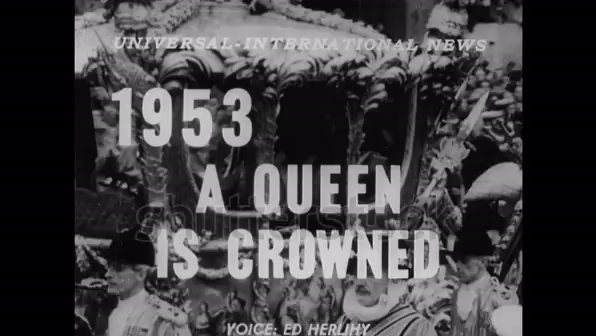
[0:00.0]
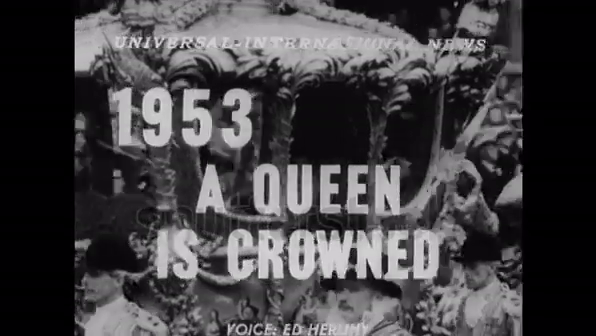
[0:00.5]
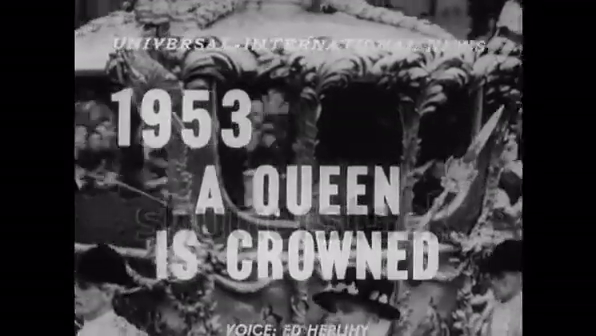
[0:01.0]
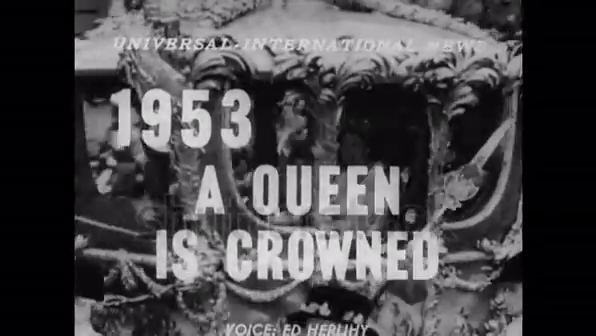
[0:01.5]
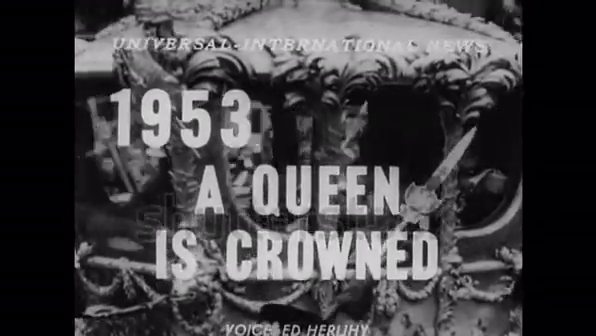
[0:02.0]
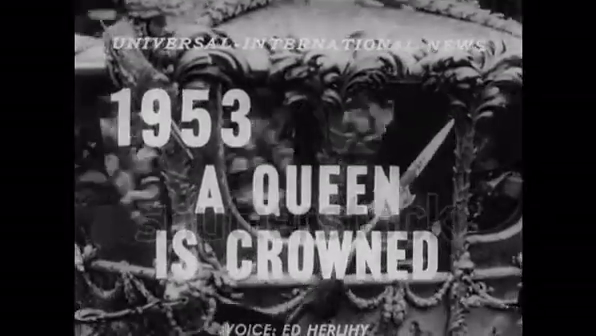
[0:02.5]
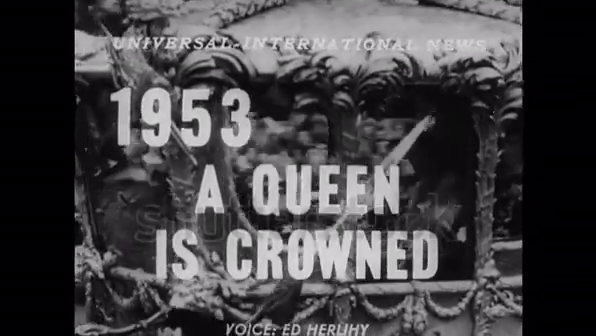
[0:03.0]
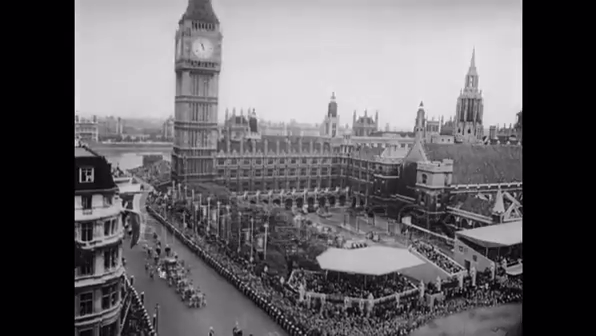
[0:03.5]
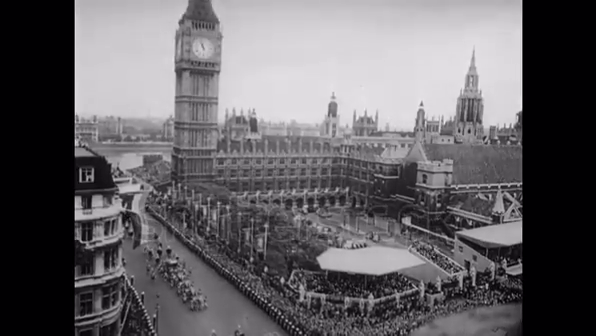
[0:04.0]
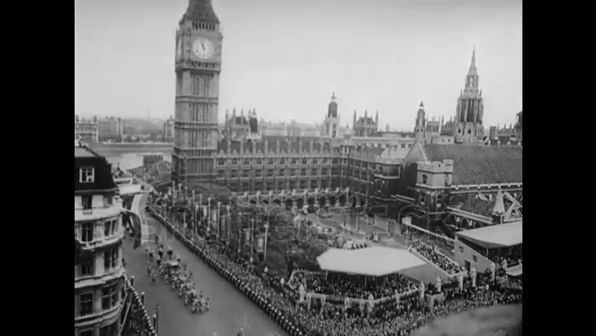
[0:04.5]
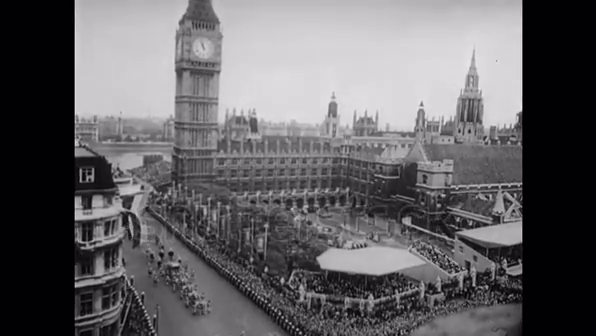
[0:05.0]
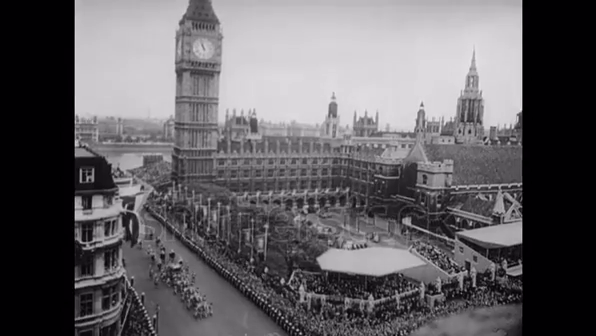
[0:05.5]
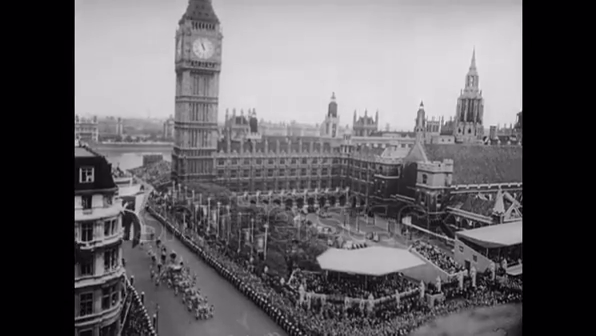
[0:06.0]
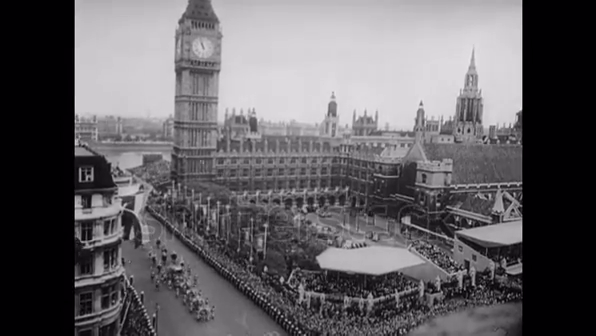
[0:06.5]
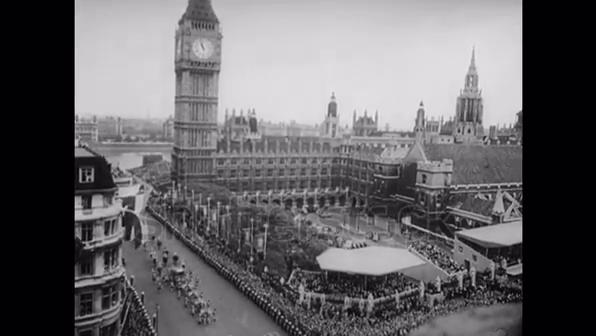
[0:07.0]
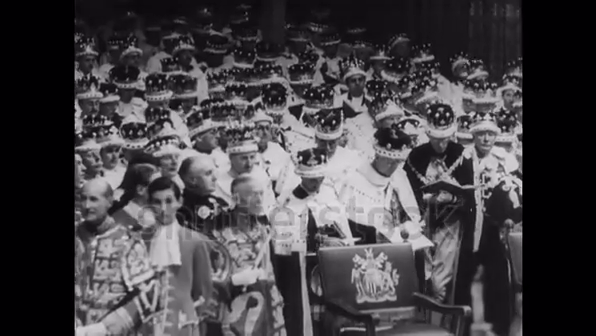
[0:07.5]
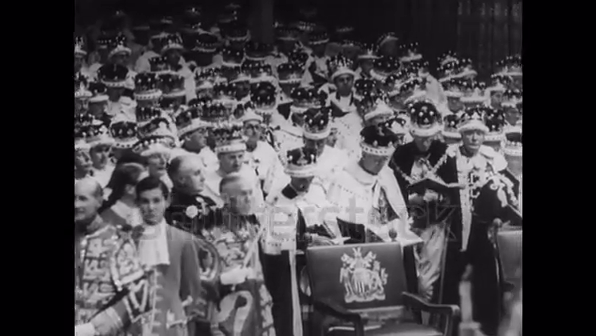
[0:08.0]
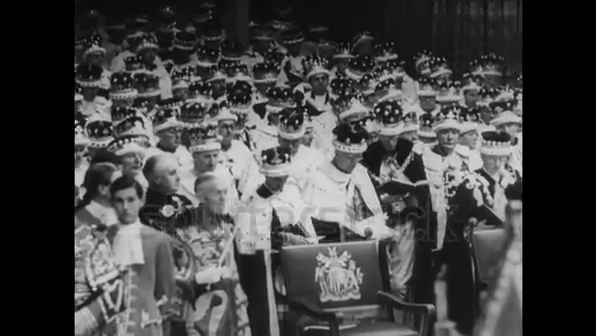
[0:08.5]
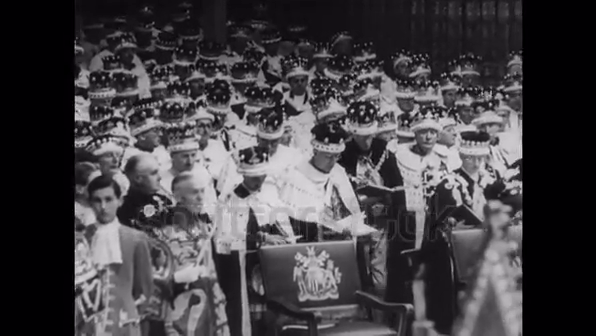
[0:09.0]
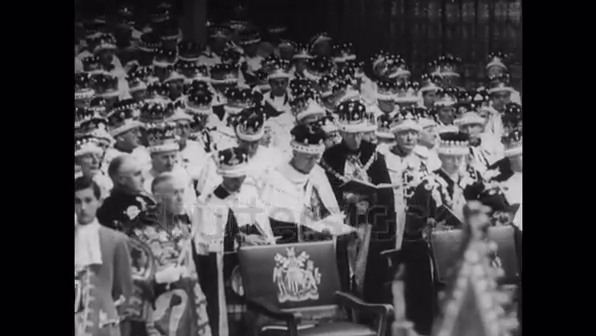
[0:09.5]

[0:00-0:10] A large caption in the center reads "1953, a queen is crowned." The black-and-white footage shows a ceremony with a march, as people, royalty, march to crown a queen. There is something like a chariot with someone riding inside it, perhaps the queen. A zoomed-out view then shows a very large church or cathedral, with a lot of people attending the event. In the bottom left corner, the royalty march in a line. A whole group of royalty appears, with many people, many of them men, wearing crowns, and some men holding books in their hands. The event takes place outside.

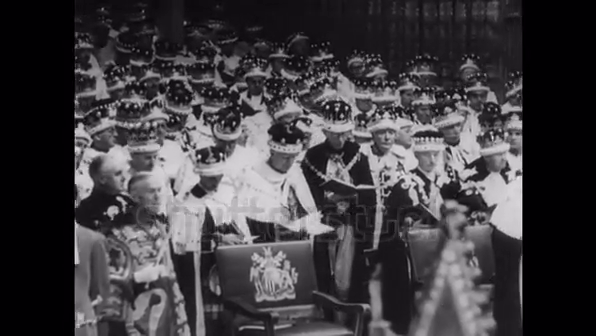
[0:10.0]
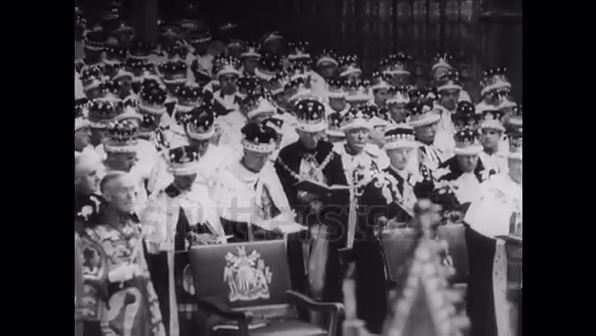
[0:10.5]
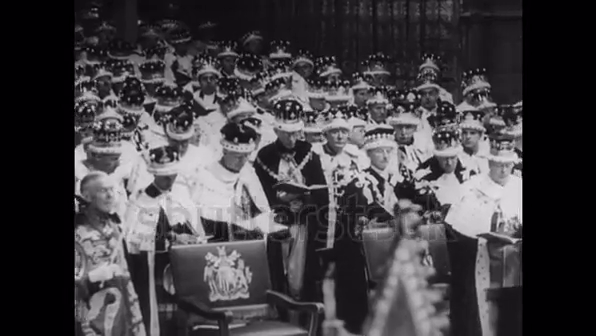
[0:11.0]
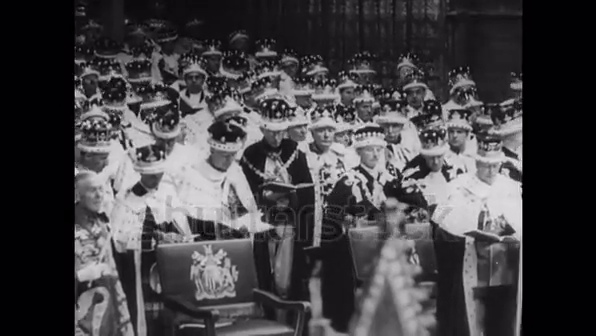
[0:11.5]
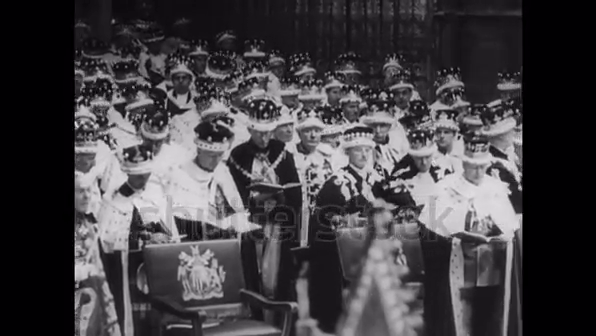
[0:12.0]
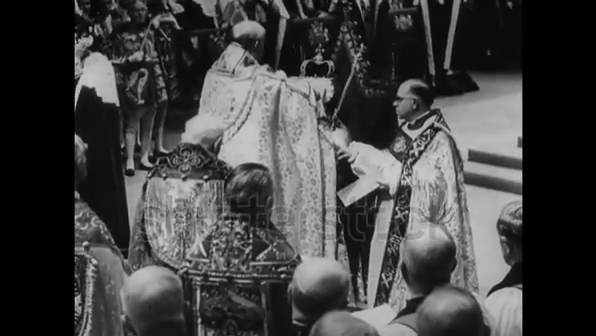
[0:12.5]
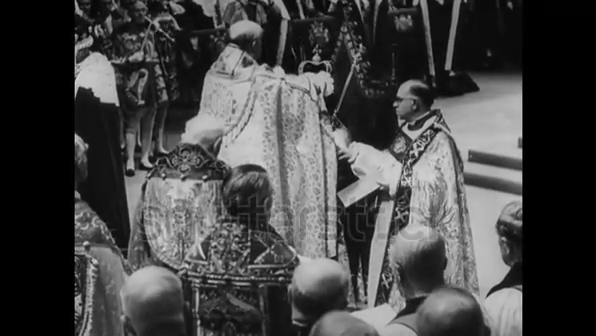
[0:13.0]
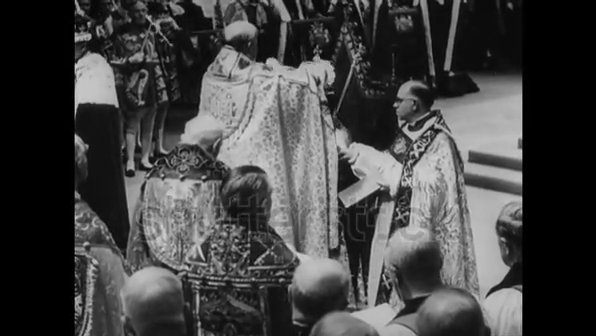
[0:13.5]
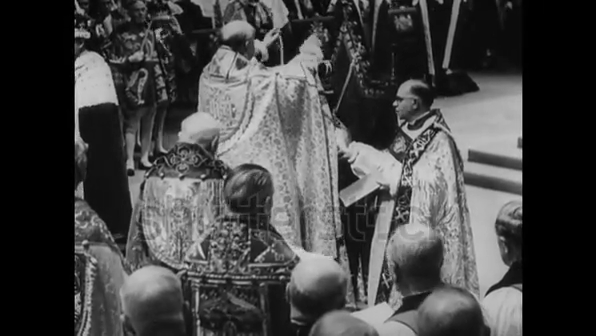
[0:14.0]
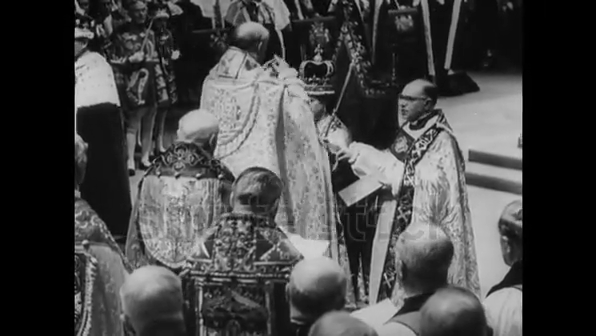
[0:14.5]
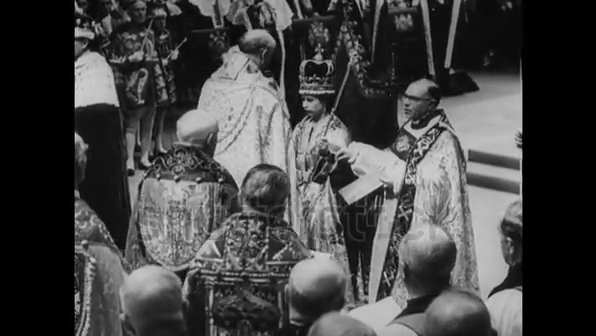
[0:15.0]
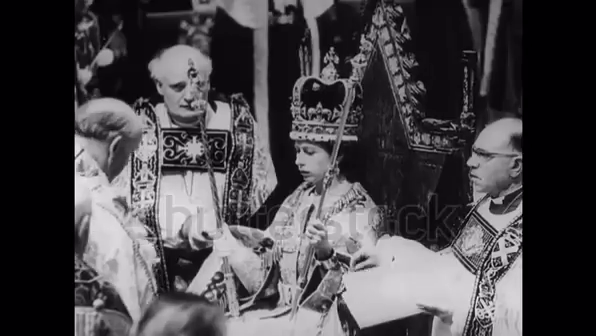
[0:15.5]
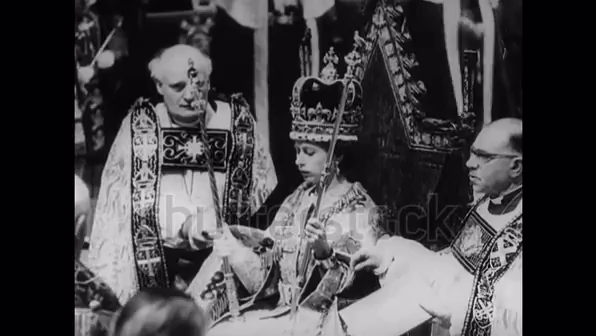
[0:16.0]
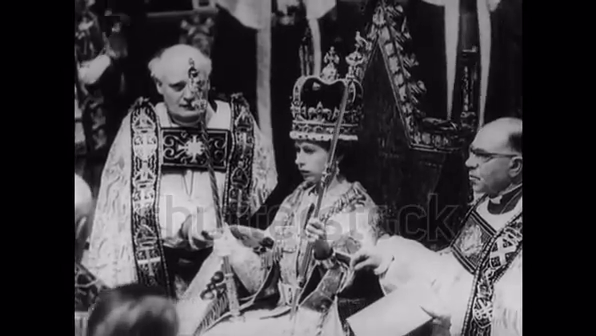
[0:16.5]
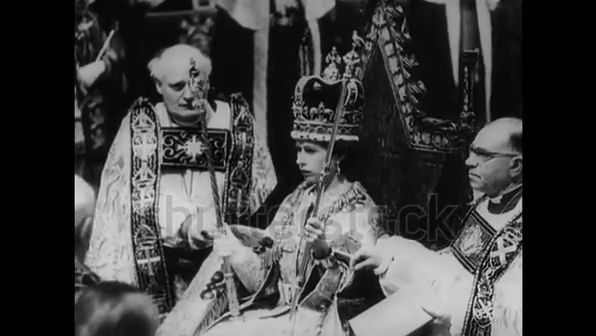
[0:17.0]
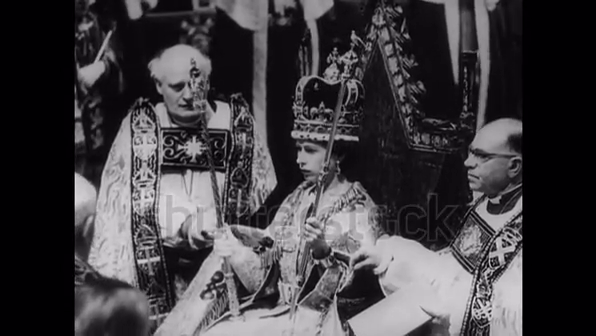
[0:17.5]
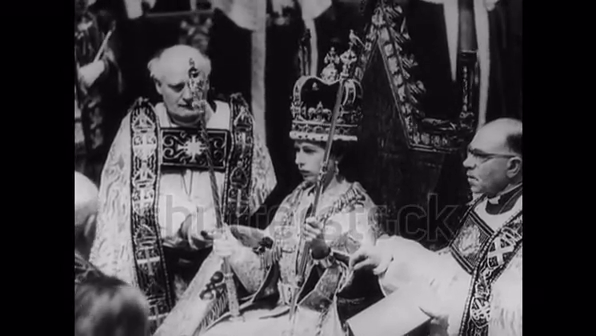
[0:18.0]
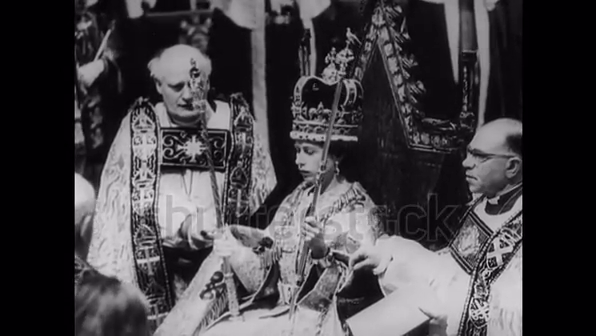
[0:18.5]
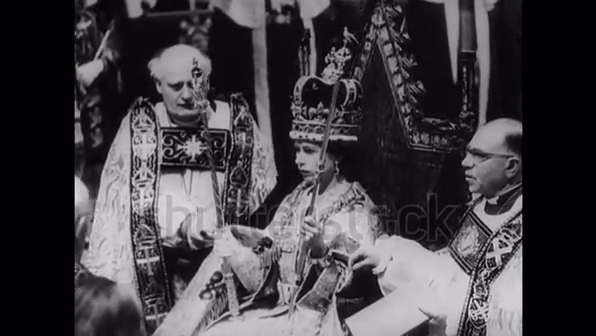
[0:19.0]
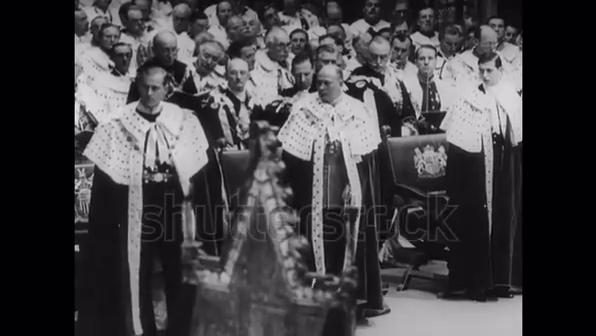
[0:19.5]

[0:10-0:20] The camera shifts to the right, showing a queen being crowned. She stands in the middle, and above her to the left is a figure who looks like either another royalty member, a king, or a priest. She is crowned and wears the crown while holding up two scepters. The footage is entirely black and white, with no color. Many people wear crowns, a lot of people attend the event, and everyone is dressed in royalty clothing.